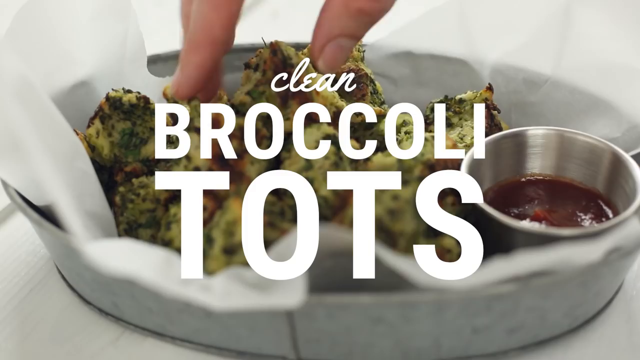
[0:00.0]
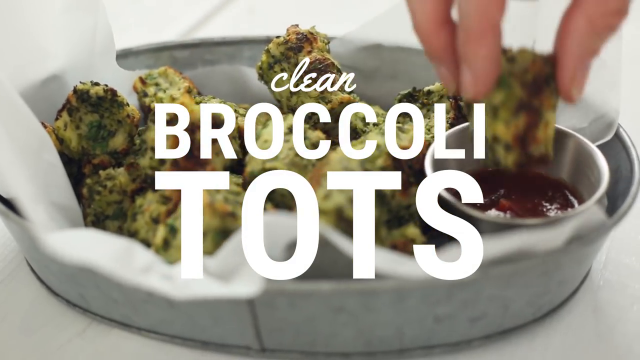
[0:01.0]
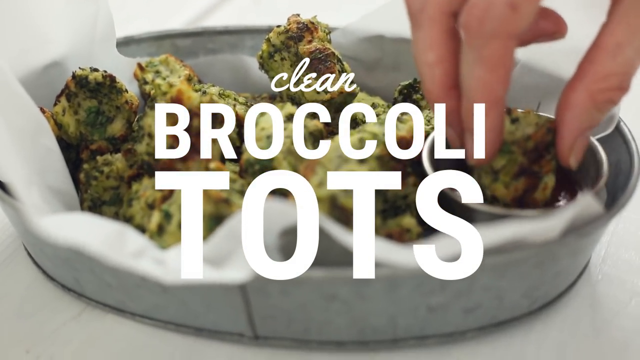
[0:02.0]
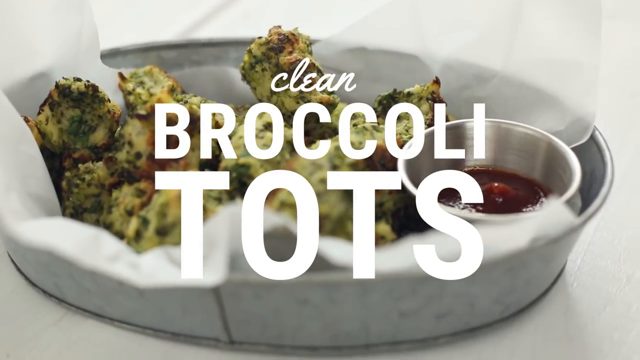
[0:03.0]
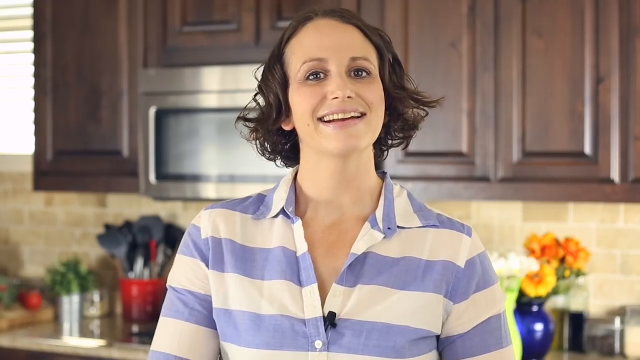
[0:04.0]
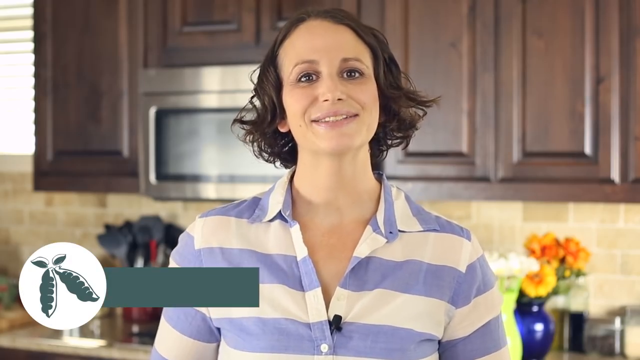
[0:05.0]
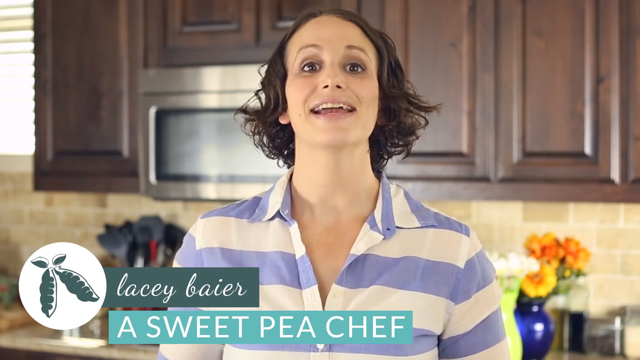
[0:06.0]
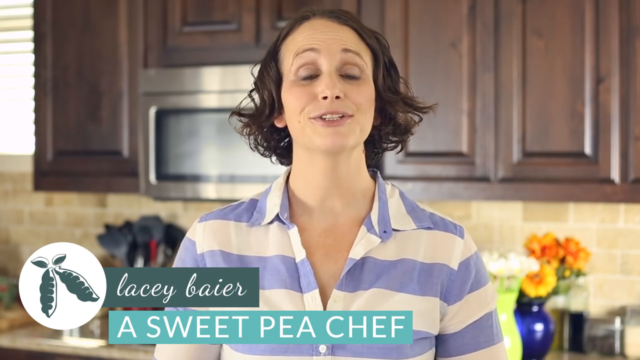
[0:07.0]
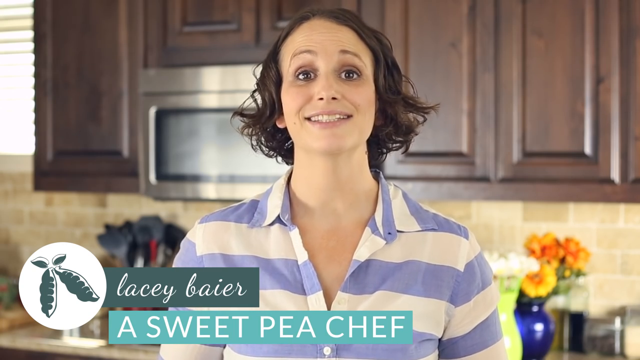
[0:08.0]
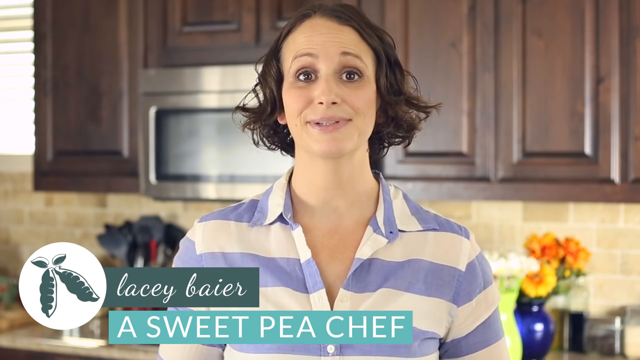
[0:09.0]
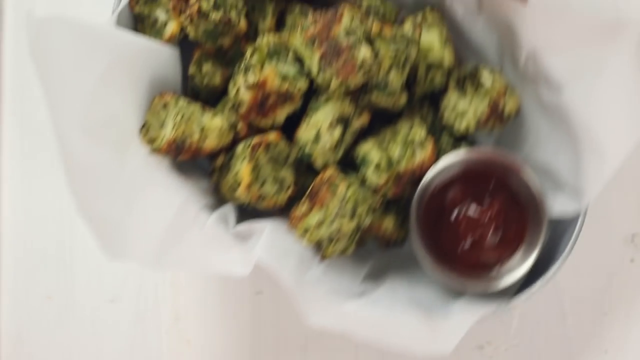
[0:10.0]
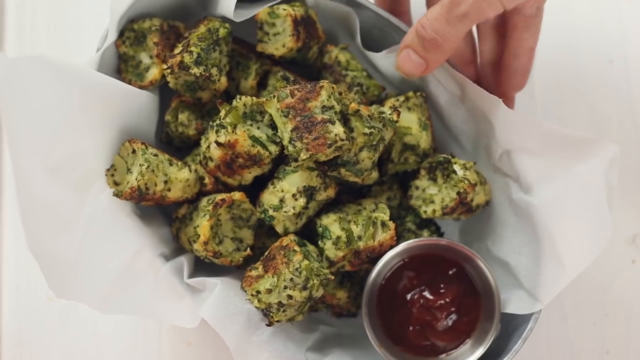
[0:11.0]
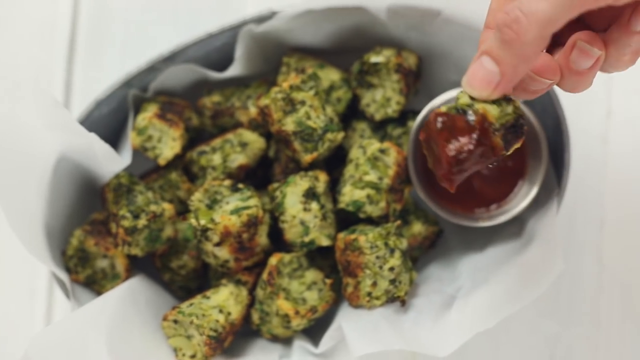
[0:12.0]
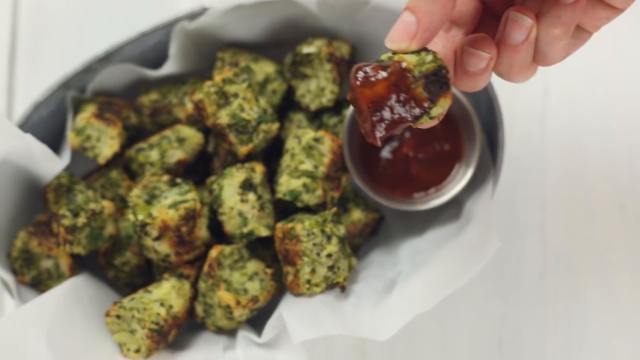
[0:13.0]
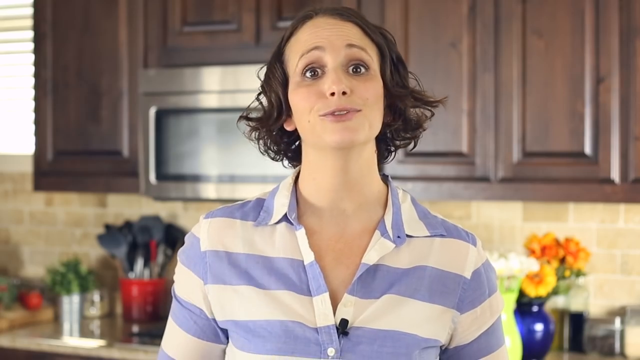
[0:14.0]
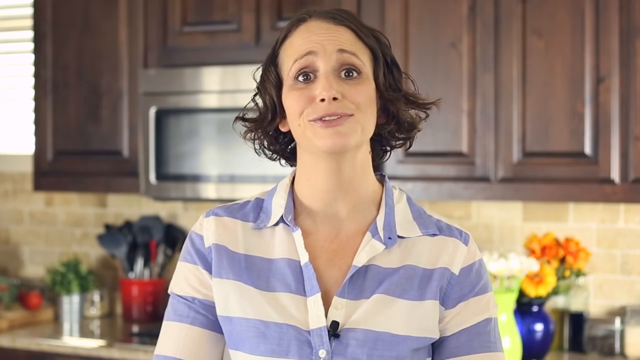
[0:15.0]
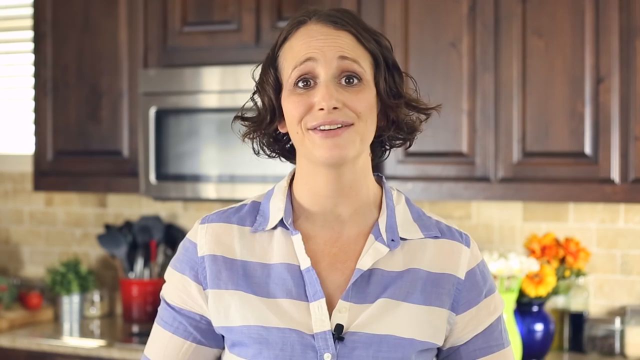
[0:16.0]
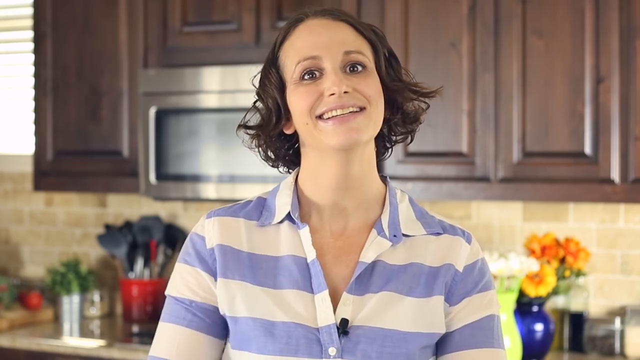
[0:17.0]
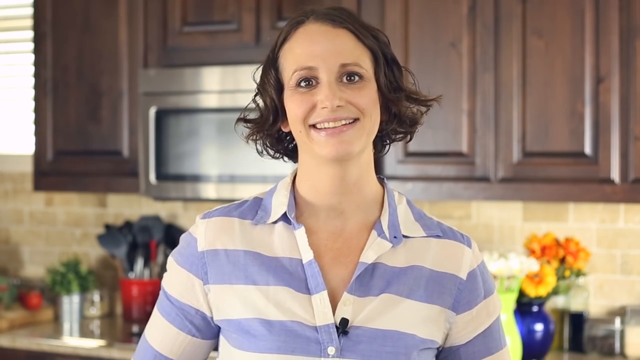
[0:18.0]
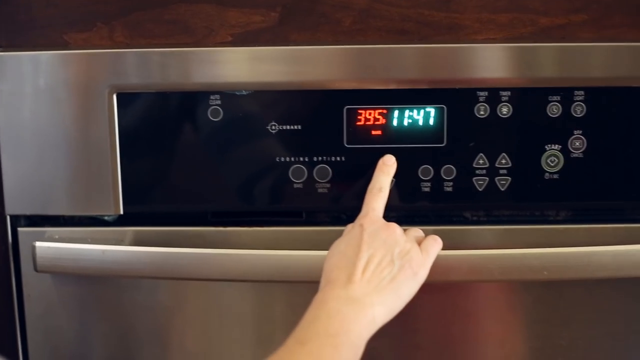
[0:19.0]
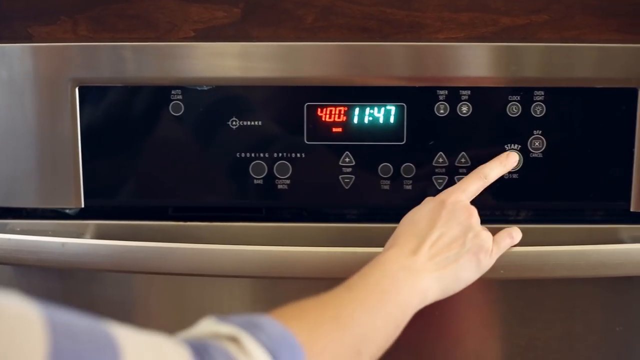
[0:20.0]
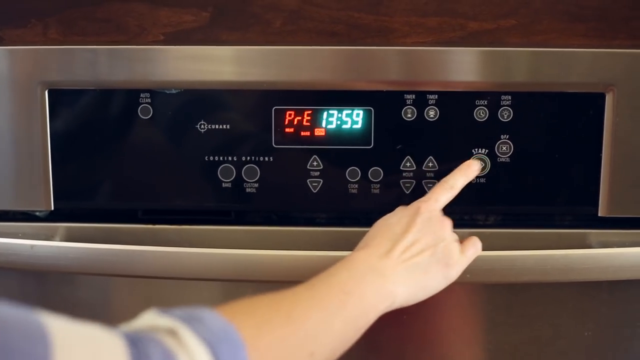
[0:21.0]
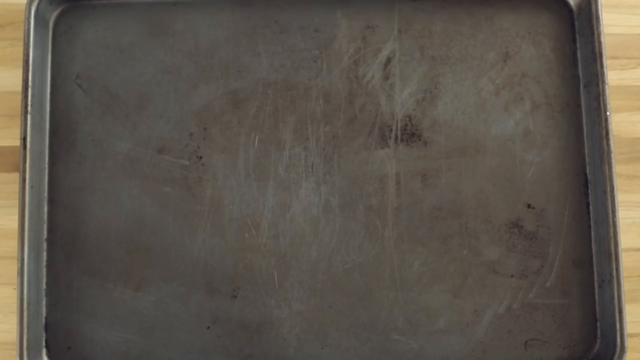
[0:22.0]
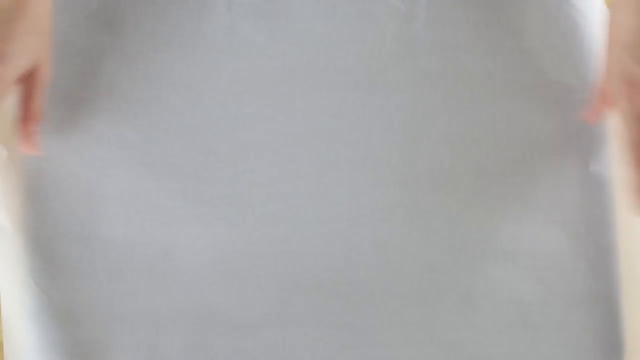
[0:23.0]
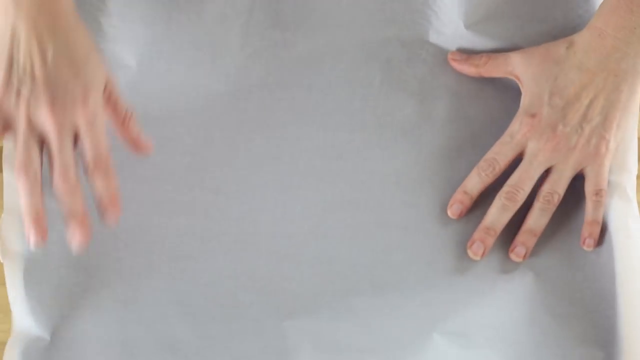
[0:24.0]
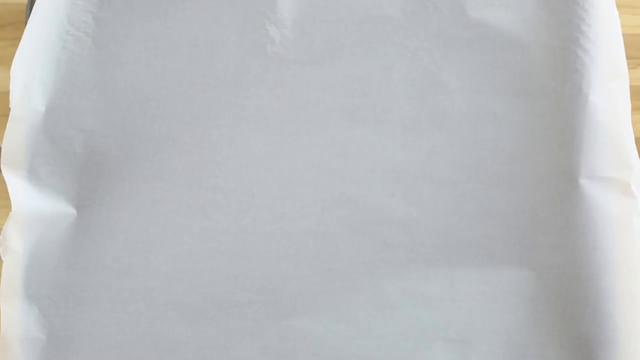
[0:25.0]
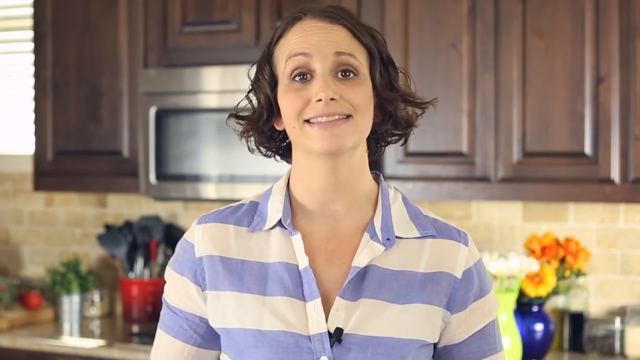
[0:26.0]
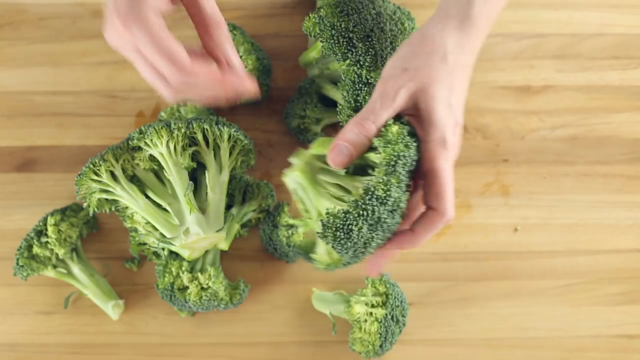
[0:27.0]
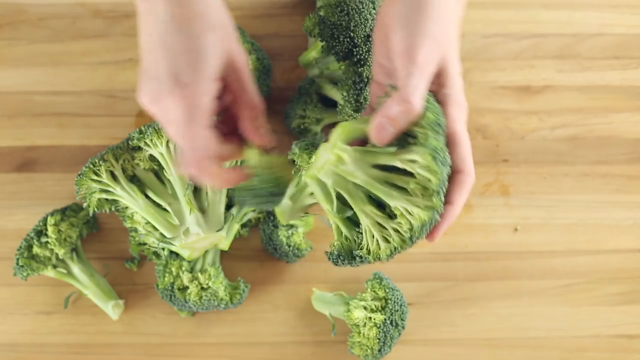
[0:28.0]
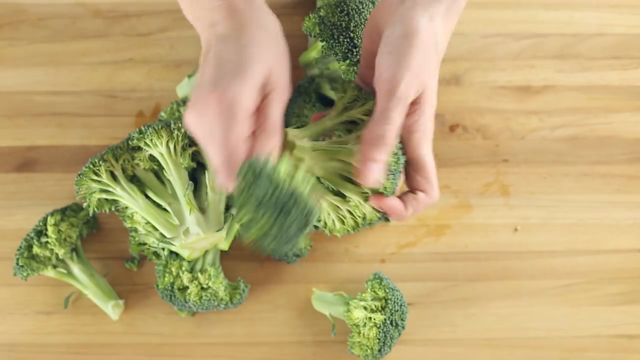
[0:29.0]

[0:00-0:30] The video opens on a small, shallow, circular silver bowl like a tray, with a piece of white wax paper on top. On it are a few pieces of broccoli shaped like tater tots that appear to have a bit of cream-colored coating on top. A hand grabs a piece of broccoli and dips it into a small silver sauce cup holding what looks like ketchup or barbecue sauce. White text in the middle of the screen reads "clean broccoli tots." The video changes to a woman standing in what looks like a home kitchen, seen from the chest up. She wears a light purple and white shirt with thick horizontal stripes and a V-neck collar, with a little microphone clipped to the bottom of the collar. She has short dark brown hair that falls below her ears and is curly at the ends. She is a Caucasian woman who looks to be in her 20s or 30s, with brown eyes, minimal makeup and a large smile with straight white teeth. In the bottom left corner is a logo that looks like a white circle with two green snap peas. To its right is a dark bluish-green rectangular box with white cursive letters reading "Lacey Baier," and beneath that a light teal box with large white text reading "a sweet pea chef." Behind her are brown cabinets, a small silver microwave and a countertop with some flowers and vases on it. The woman talks to the camera. The scene changes to a white tabletop, where a close-up shows hands setting down a small silver tin bowl lined with white wax paper, holding a bunch of broccoli pieces shaped like tater tots with a kind of yellow coating baked on top. Next to the broccoli is the small round silver cup filled with what looks like ketchup or barbecue sauce. The hand grabs a broccoli tot, dips it into the sauce and holds it up in front of the camera. The video returns to the woman in the kitchen in the striped white and purple shirt; she speaks with a large smile, her eyebrows raised high and her eyes wide. A close-up shows a large silver oven built into the wall, with fingers pressing the button to set the temperature to 400 degrees. They press start, and the small digital screen shows "pre" in red letters and a timer counting down from 13:59 in light green numbers. Next, a close-up shows a large silver pan on a light brown wooden table; a pair of hands places a large piece of white cooking paper onto the pan and kind of flattens it down. The camera goes back to the woman, seen from the chest up, speaking to the camera. The view then changes to a light brown wooden surface with a few small chunks of broccoli, where a close-up shows a pair of hands breaking the broccoli stalks into smaller pieces and putting them down on the table or cutting board.